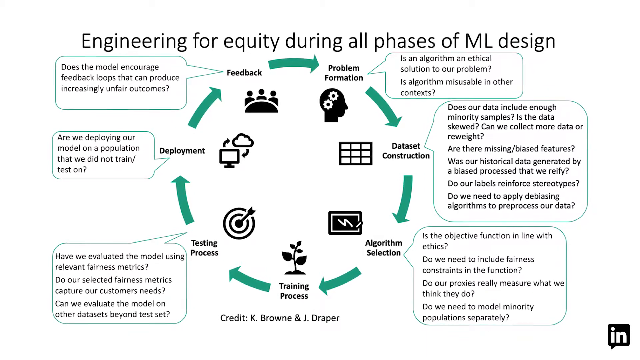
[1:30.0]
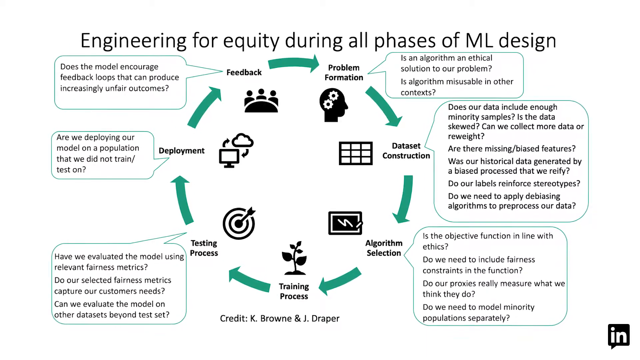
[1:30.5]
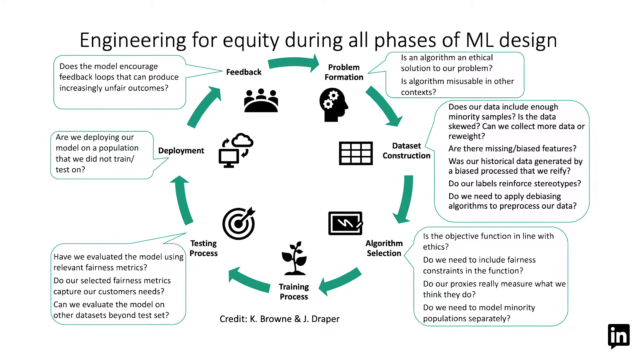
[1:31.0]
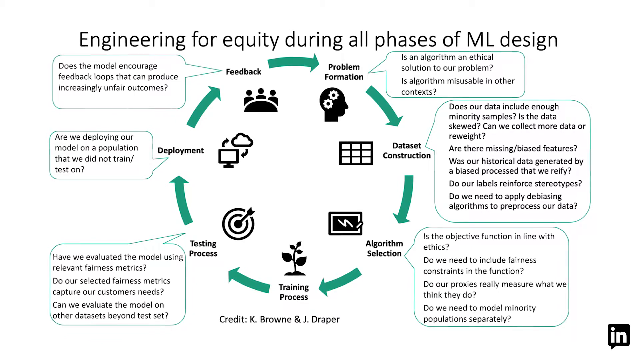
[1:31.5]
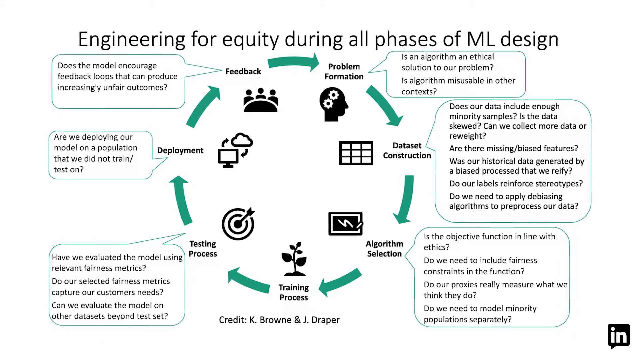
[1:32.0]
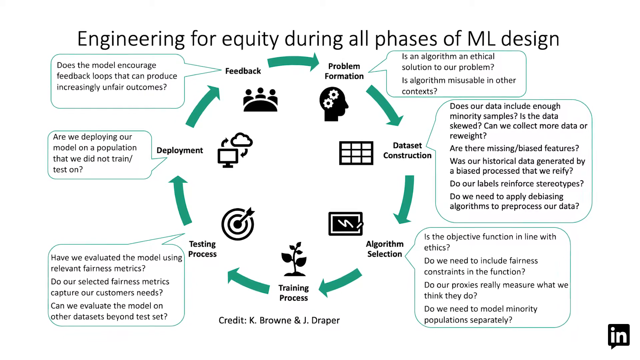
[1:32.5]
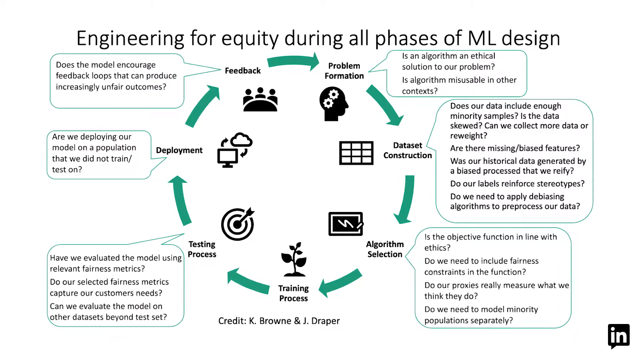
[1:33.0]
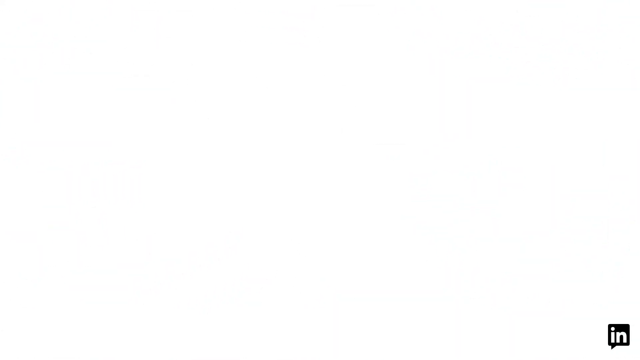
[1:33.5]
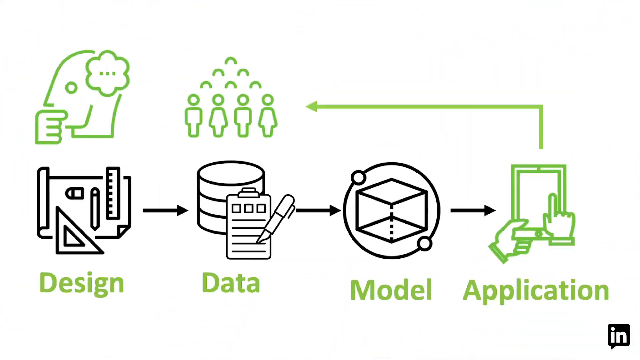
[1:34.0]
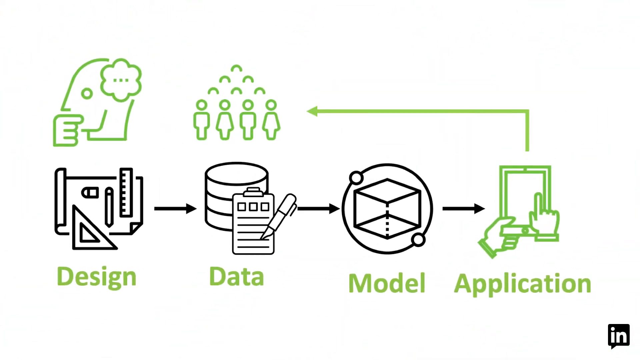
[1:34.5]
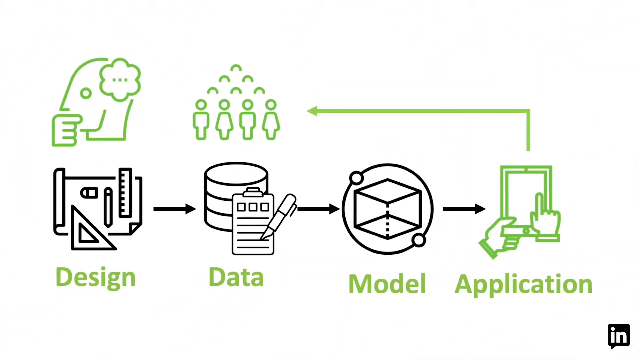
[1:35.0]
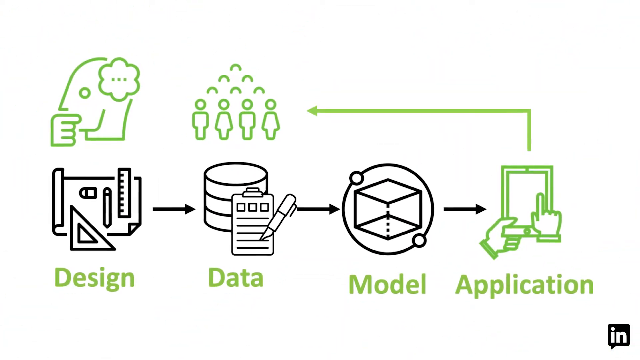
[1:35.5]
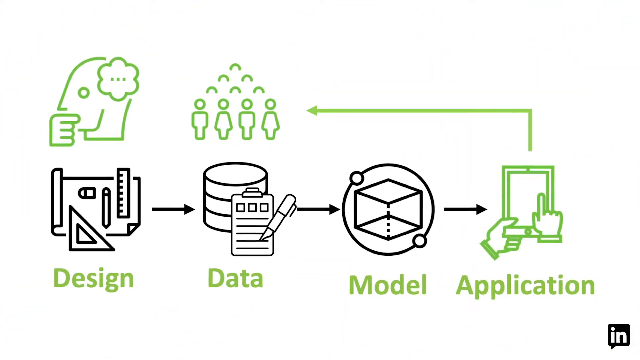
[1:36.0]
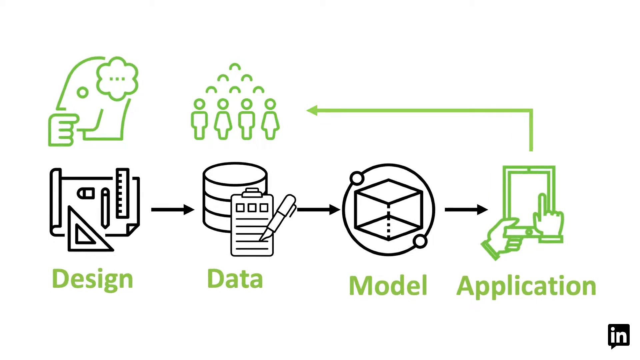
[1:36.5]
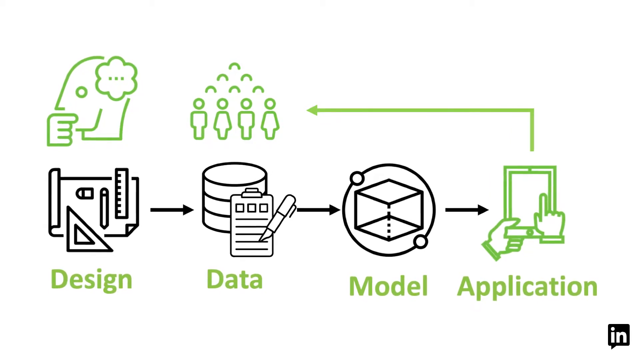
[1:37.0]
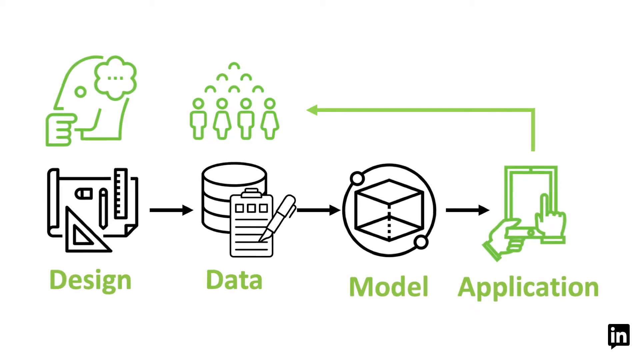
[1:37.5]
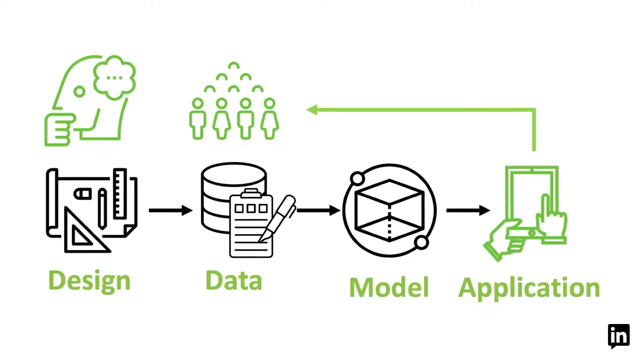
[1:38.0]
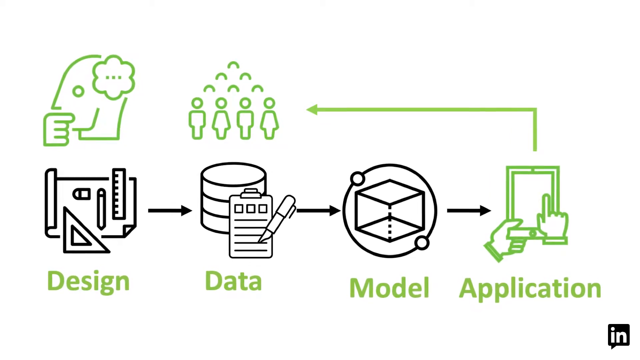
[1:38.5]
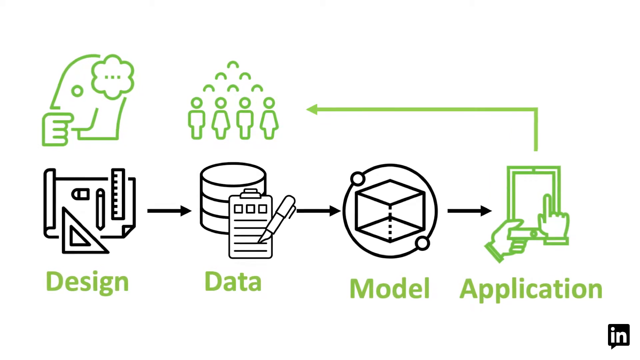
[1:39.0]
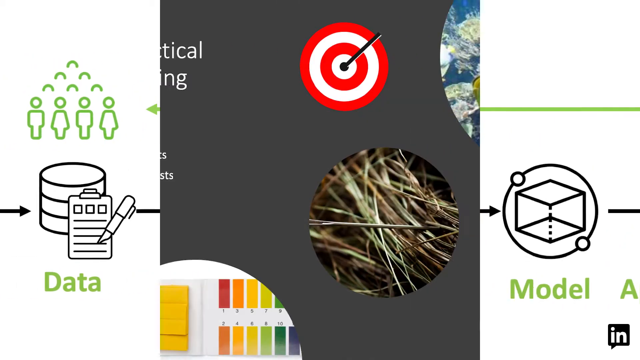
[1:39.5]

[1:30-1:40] The circular graph titled "engineering for equity during all phases of ML design" runs from feedback to problem formation, data set construction, algorithm selection, training process, testing process, deployment, and back to feedback, with each phase having a word bubble that further explains it. The presentation then transitions to another graph-like slide that starts with design, with an arrow pointing to data, an arrow pointing to model, an arrow pointing to application, and then an arrow going above and toward a group of people.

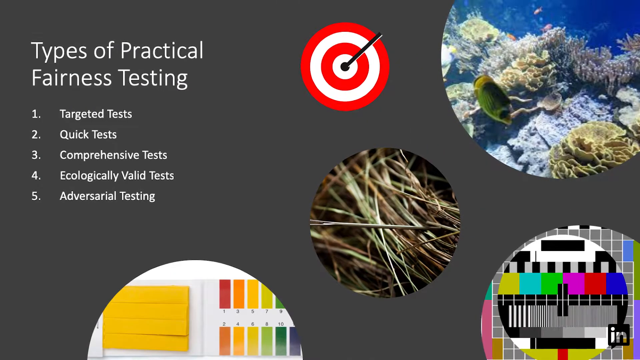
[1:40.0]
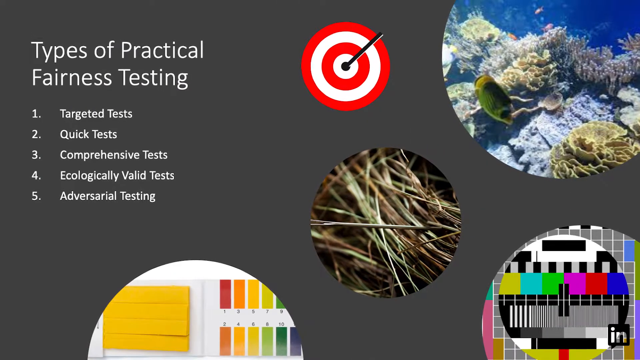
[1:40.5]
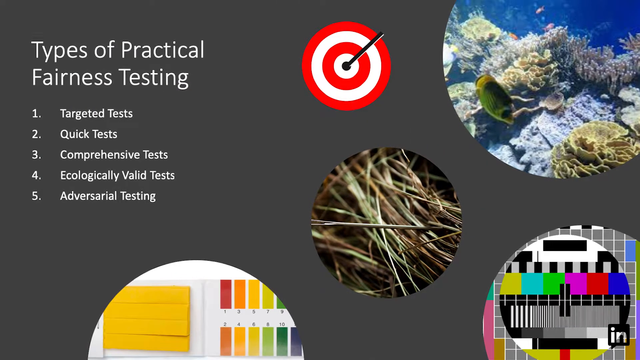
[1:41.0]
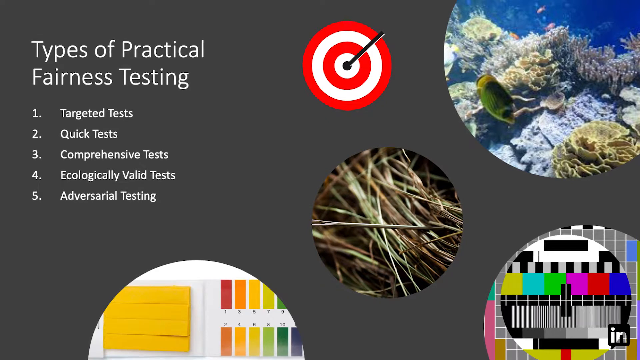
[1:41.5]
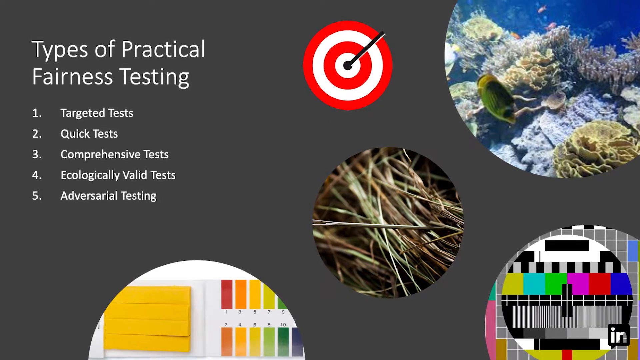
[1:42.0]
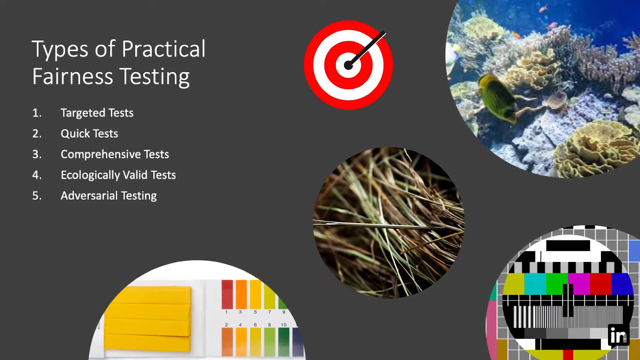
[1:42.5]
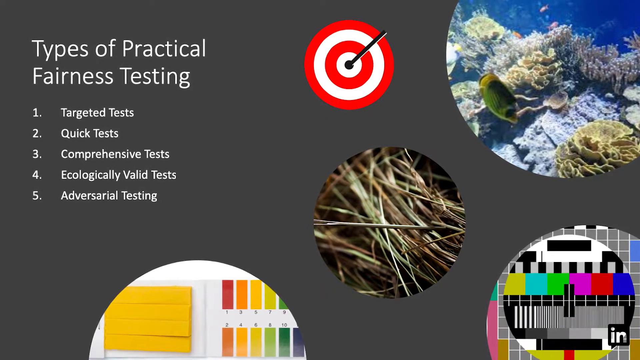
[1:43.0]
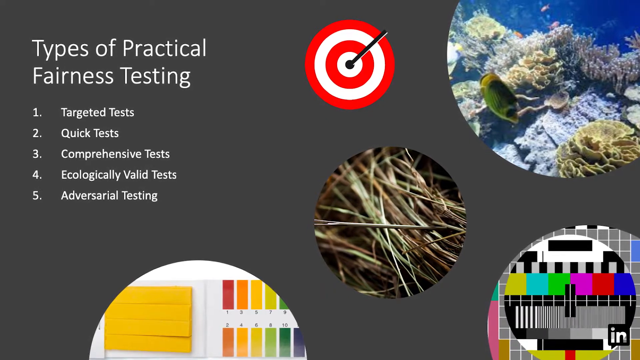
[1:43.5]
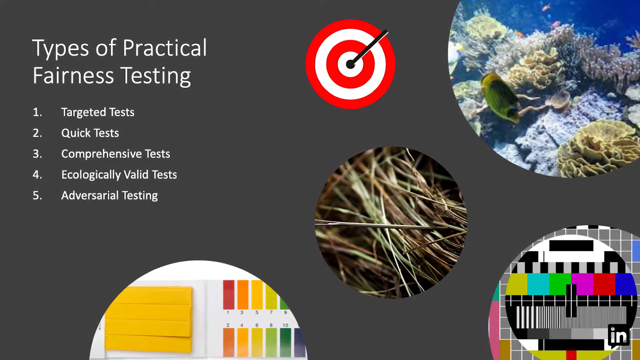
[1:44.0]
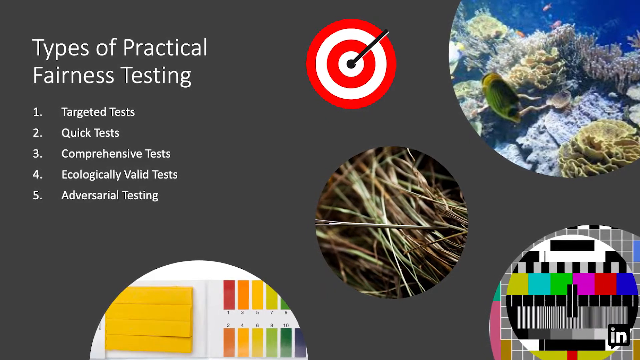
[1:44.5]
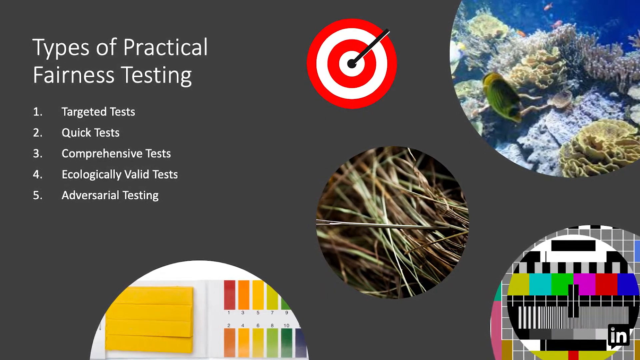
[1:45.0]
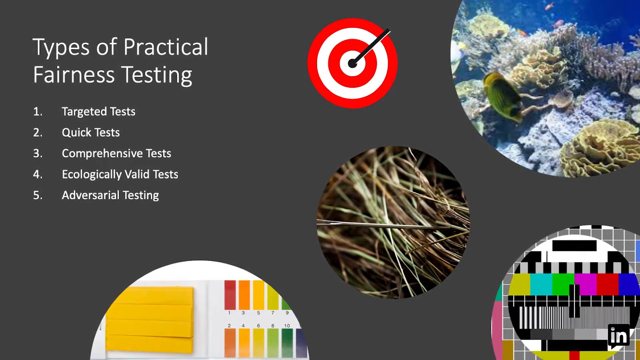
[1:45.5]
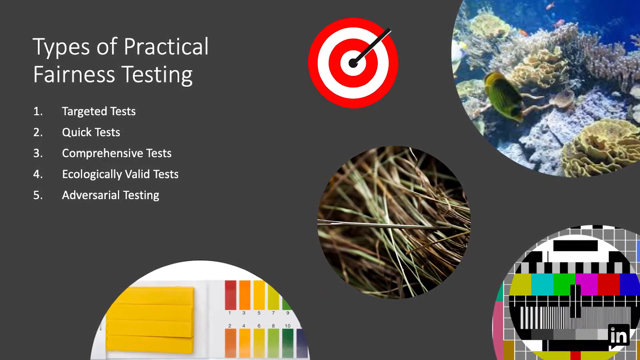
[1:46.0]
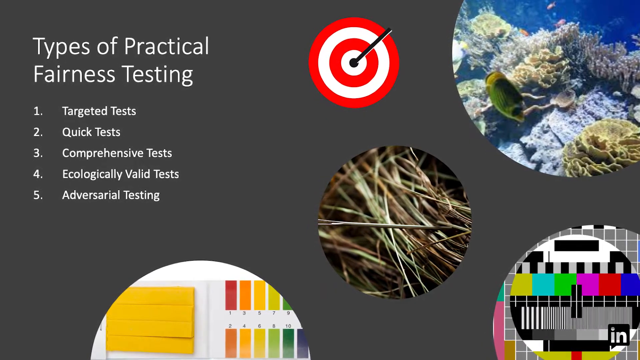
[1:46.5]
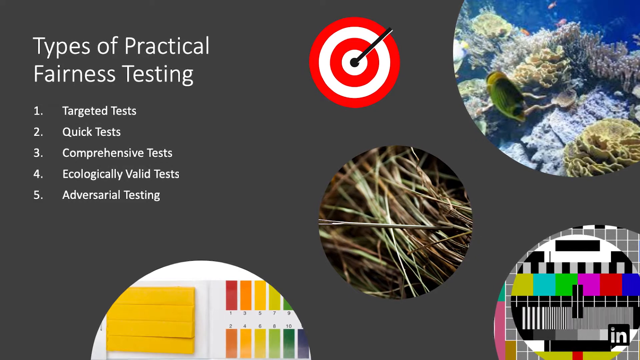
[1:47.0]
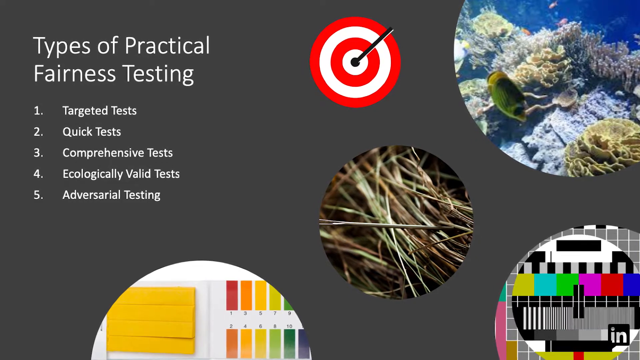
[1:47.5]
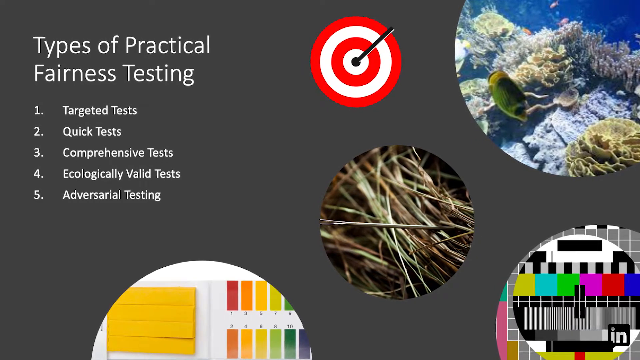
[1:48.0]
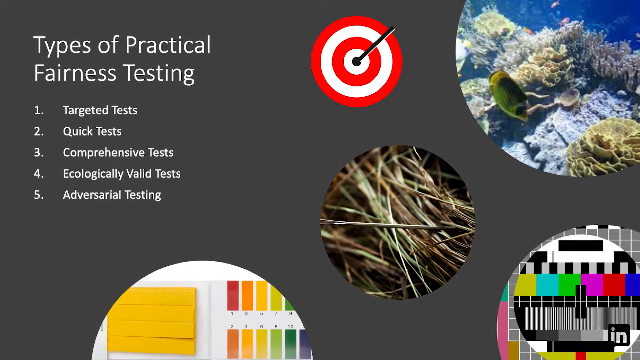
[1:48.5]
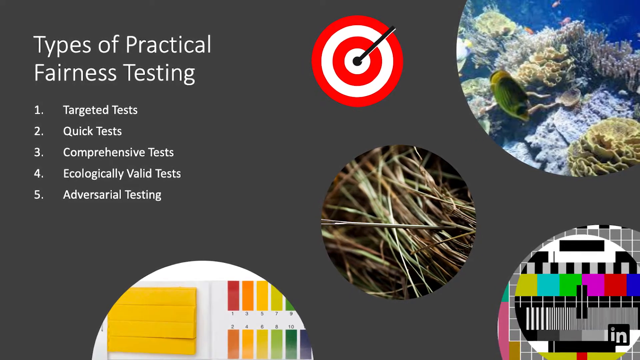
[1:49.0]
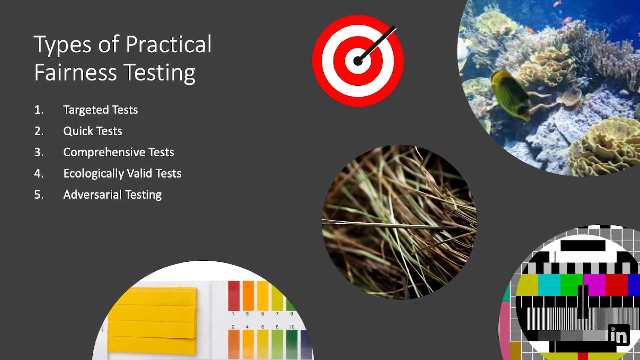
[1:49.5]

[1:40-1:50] A gray-background slide has text in the top left reading "types of practical fairness testing", followed by a list: "1. targeted tests", "2. quick tests", "3. comprehensive tests", "4. ecologically valid tests" and "5. adversarial testing". The text is on the left side. There is an icon of a target at the top middle, a kind of ocean icon in the top right, and a bundle of sticks icon in the middle. In the bottom left is what looks like an image of some sticky notes, and in the bottom right what looks like an image of some colors. The video stays on this slide for the rest of the shot.